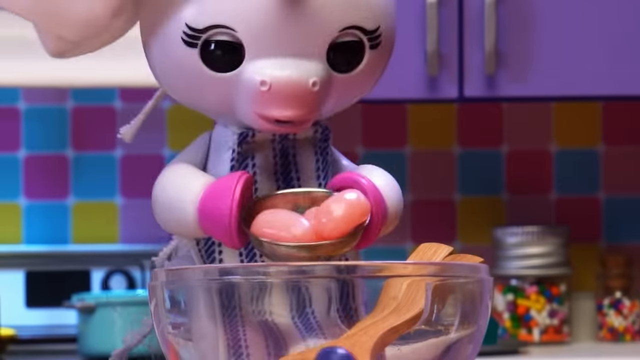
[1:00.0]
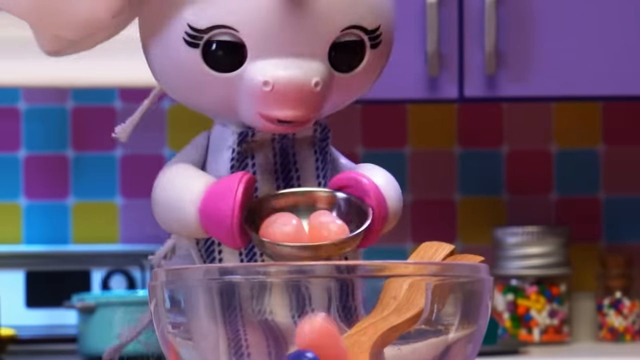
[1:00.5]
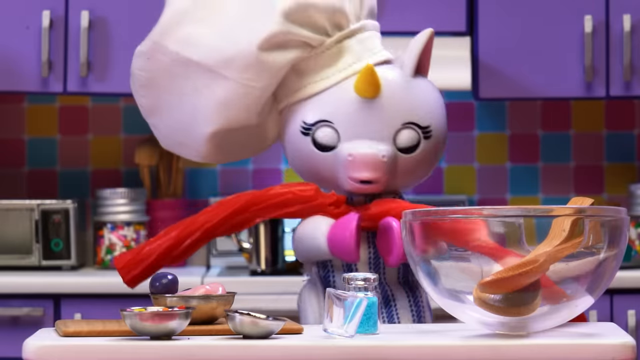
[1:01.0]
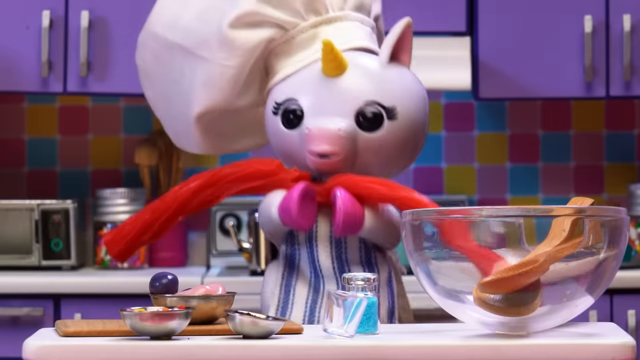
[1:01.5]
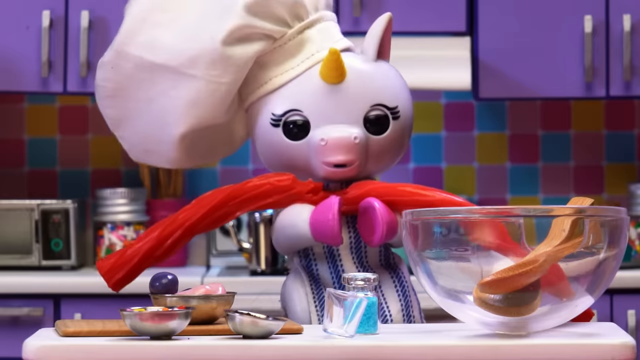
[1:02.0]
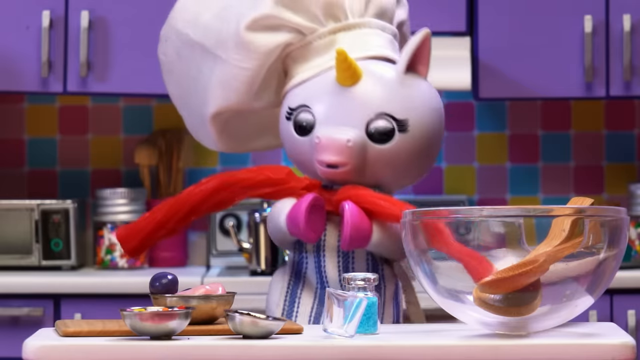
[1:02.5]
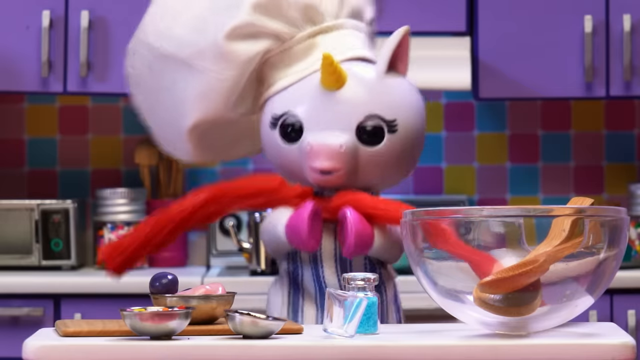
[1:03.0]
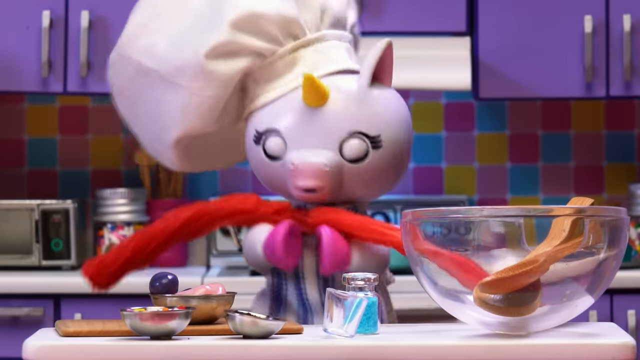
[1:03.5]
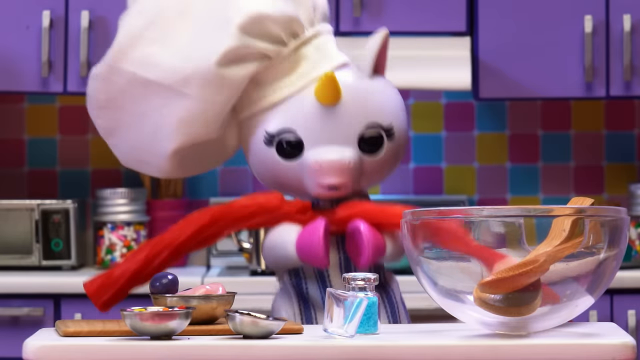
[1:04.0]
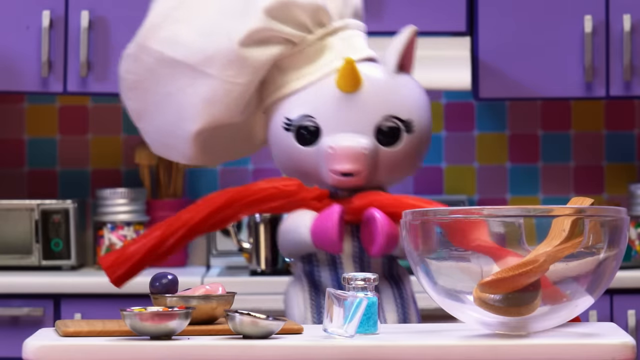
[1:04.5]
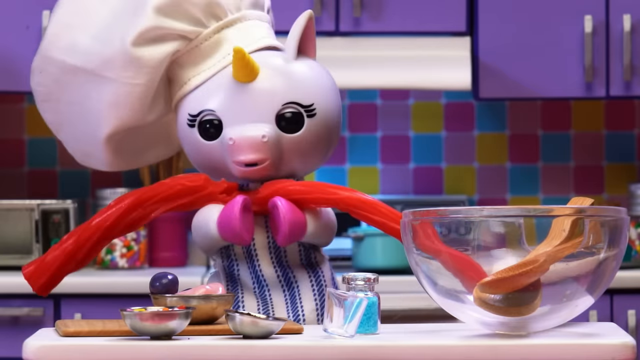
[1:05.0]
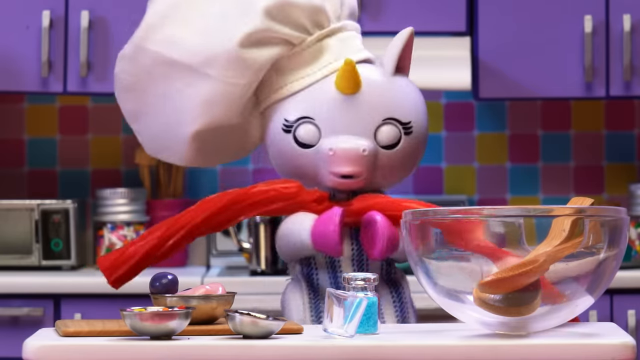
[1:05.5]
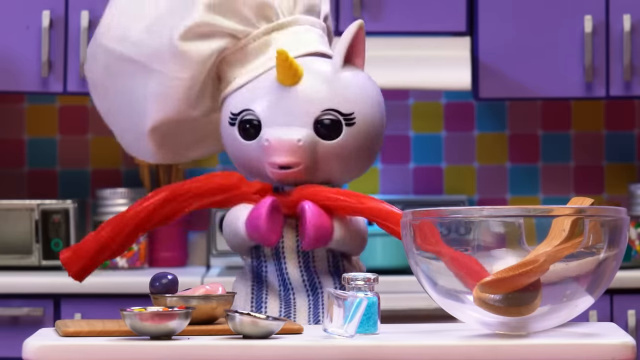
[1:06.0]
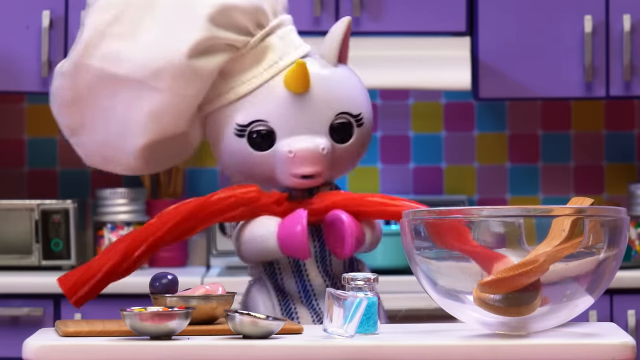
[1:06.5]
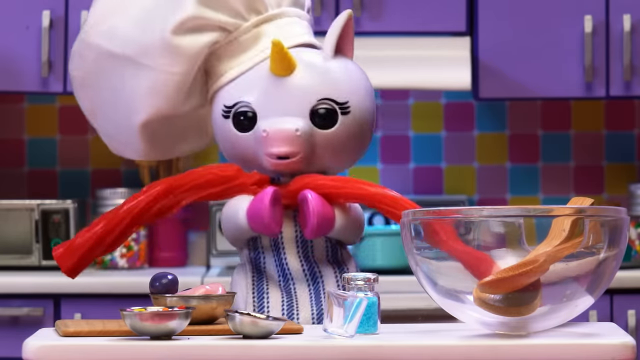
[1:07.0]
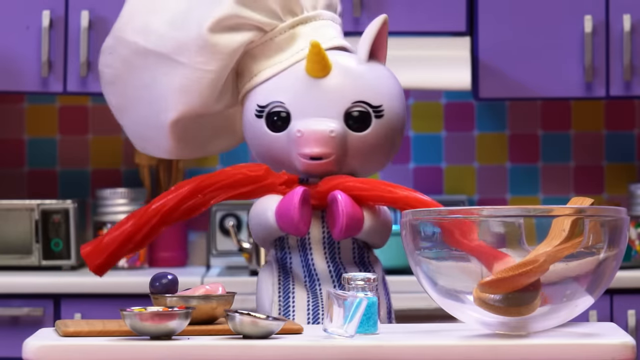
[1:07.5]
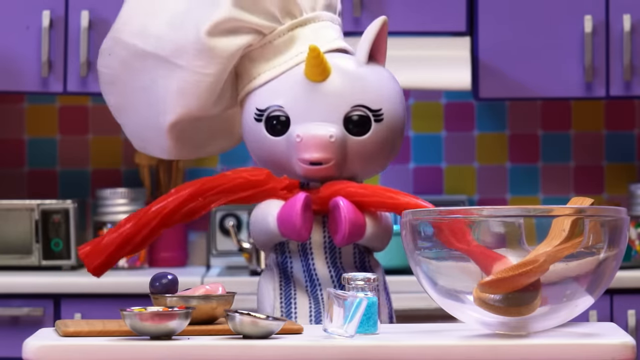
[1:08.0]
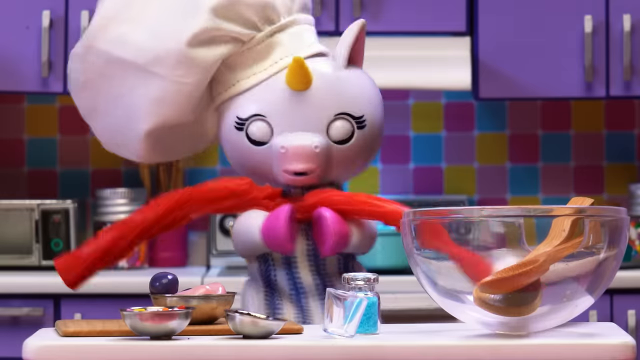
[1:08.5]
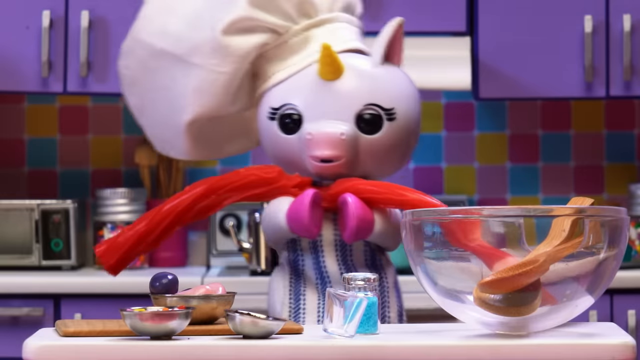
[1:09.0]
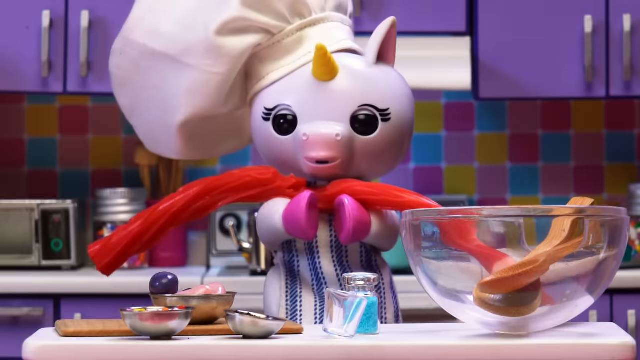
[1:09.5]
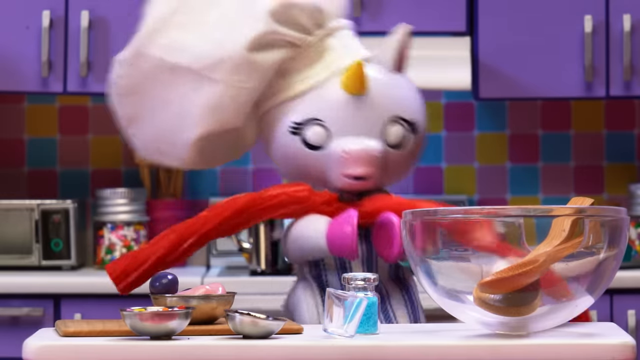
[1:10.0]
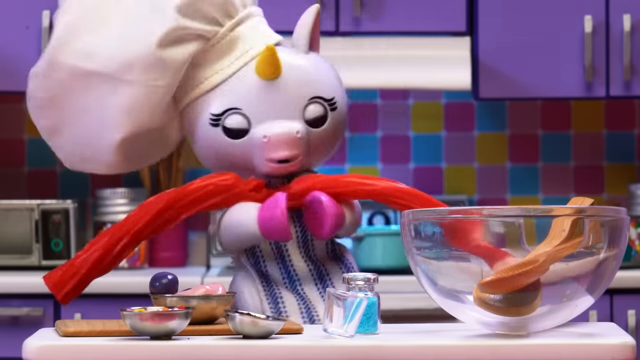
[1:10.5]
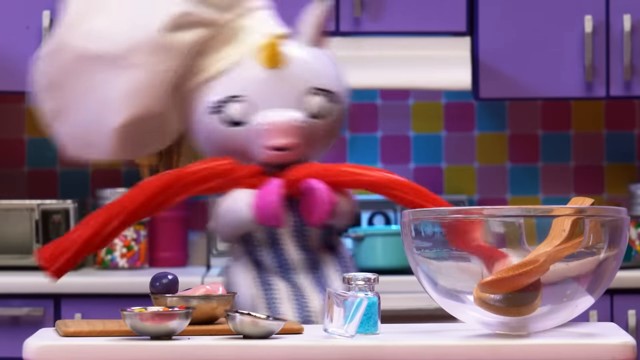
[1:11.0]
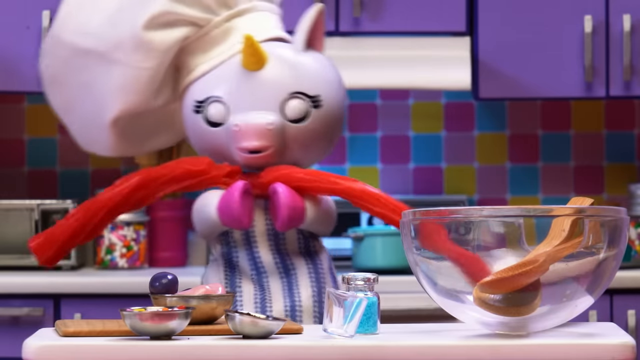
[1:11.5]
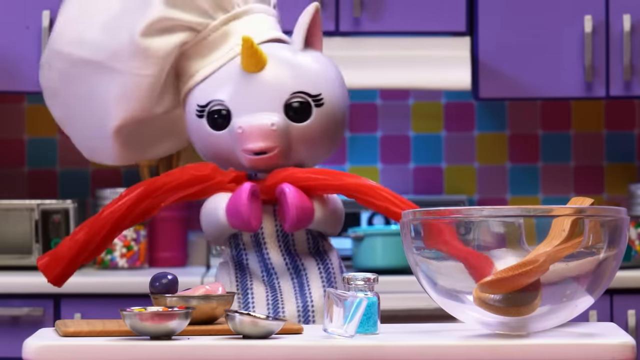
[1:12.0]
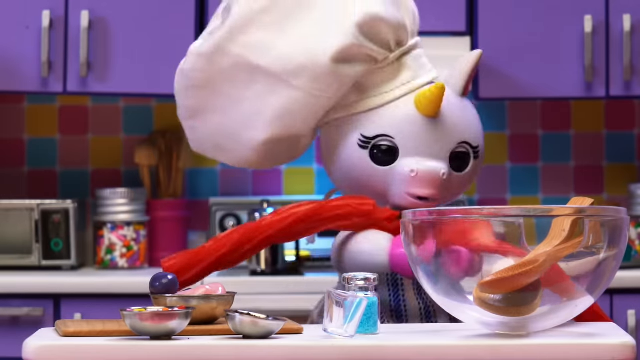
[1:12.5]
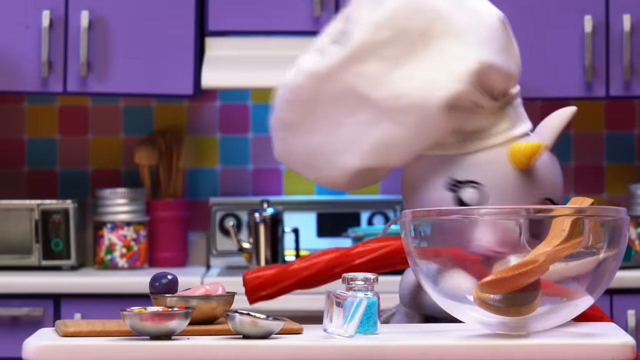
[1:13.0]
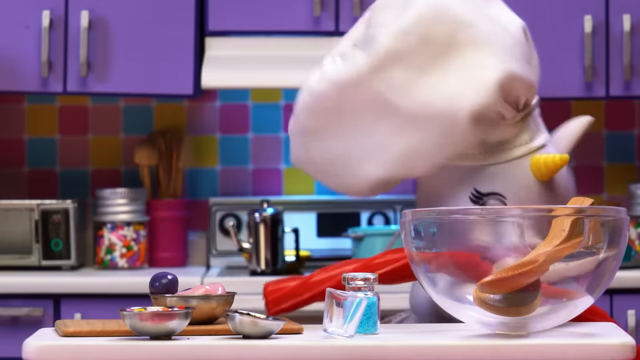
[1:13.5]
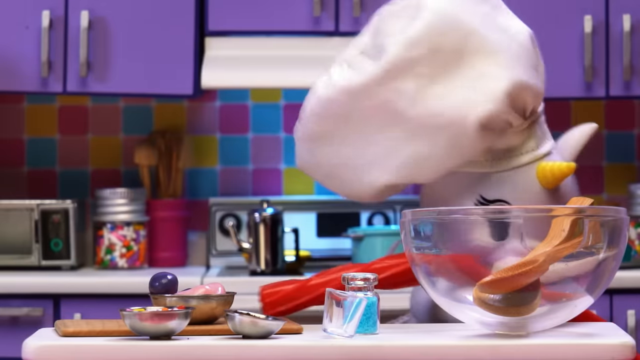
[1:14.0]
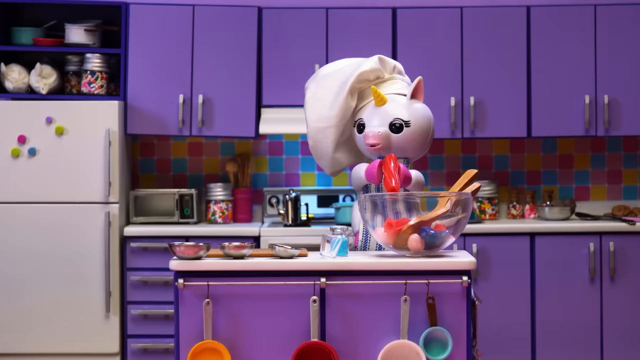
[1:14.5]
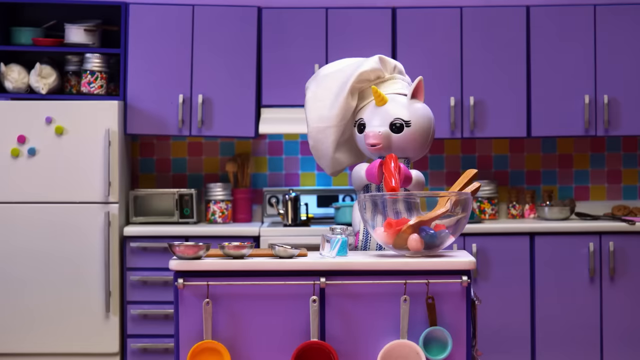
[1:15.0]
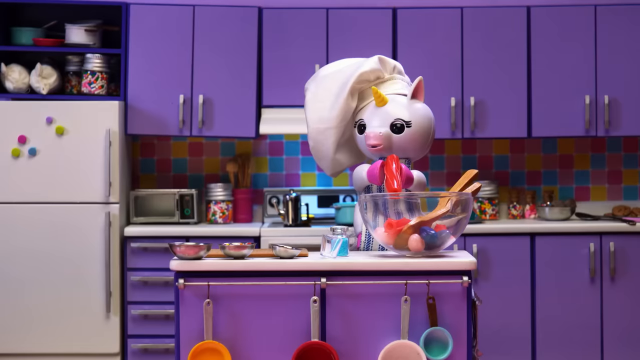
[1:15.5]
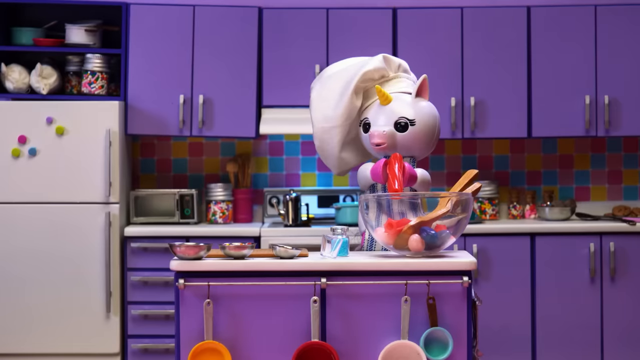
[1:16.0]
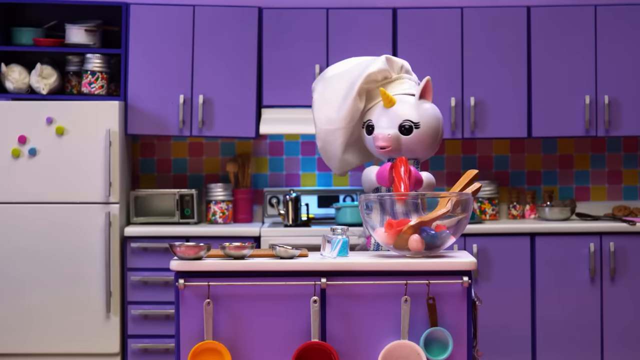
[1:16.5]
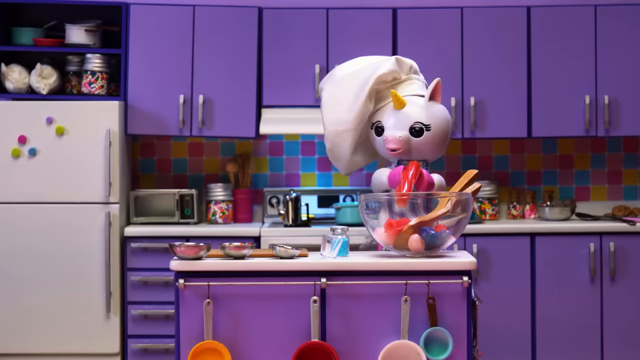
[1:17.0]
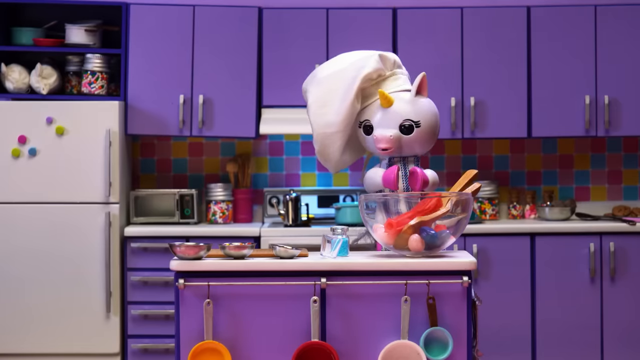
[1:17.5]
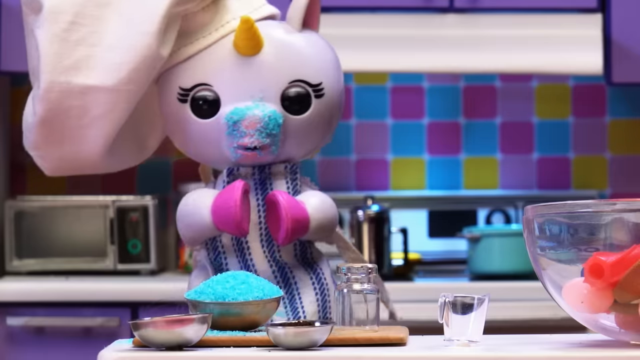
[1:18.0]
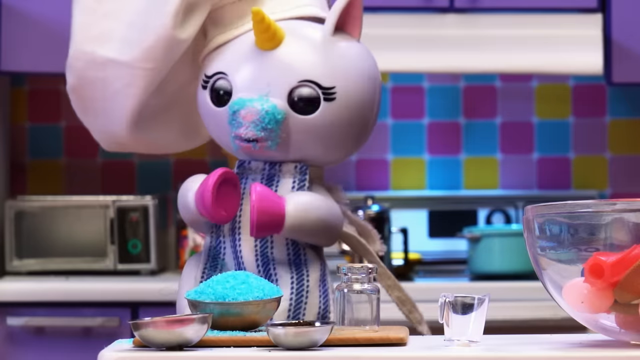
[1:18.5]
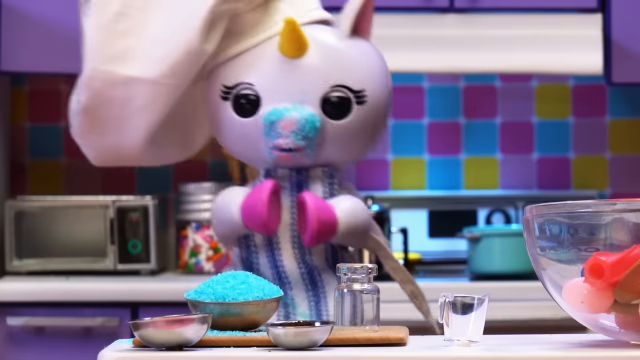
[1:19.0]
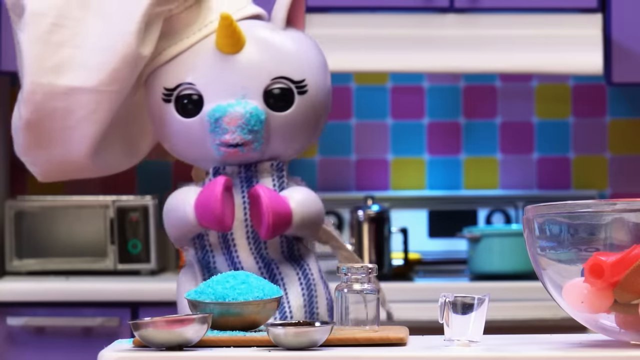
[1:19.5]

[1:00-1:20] The unicorn shakes the metal bowl, putting the last of the jelly beans into the glass bowl. The camera cuts and zooms out a bit. She now holds something long and red over her arms that looks like some kind of taffy or licorice. She appears to be speaking with the licorice in her arms, moving kind of up and down and side to side, her eyes blinking. She continues moving with the licorice, then moves over to the bowl and starts shaking her head. After a cut, the licorice appears to have been cut into smaller pieces: one is already in the glass bowl on top of the jelly beans with the wooden spoons, and another small piece is between her hooves; she lets go and places it into the bowl. The camera cuts to a close-up of her with her hooves out in front of her; she is wearing a blue and white striped apron. On the counter in front of her is a metal bowl with some sort of blue sugar, and it appears she may have stuck her face in it, because blue sugar is around her mouth and nose and stuck to her face.